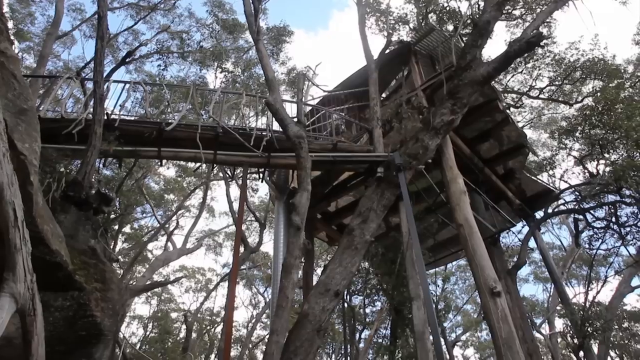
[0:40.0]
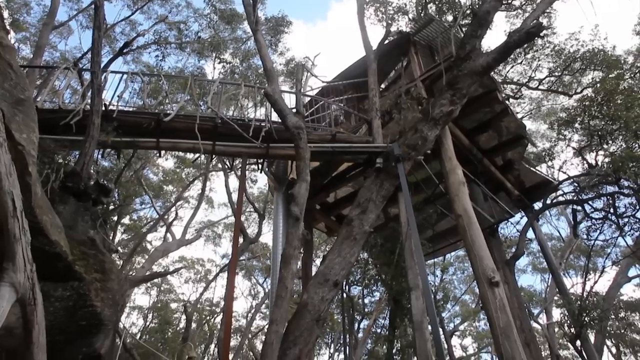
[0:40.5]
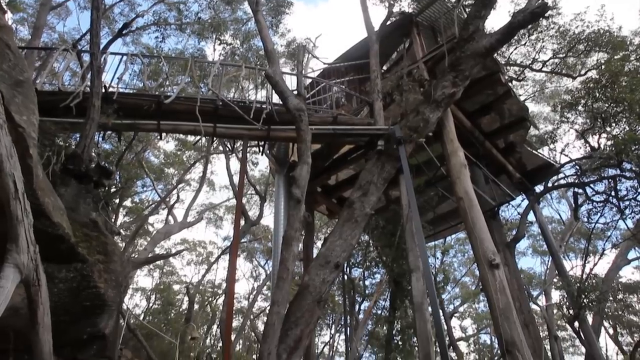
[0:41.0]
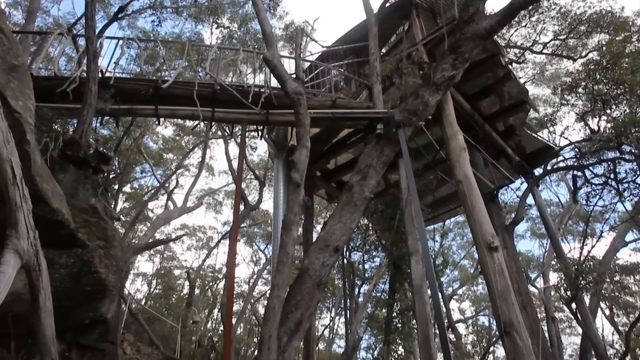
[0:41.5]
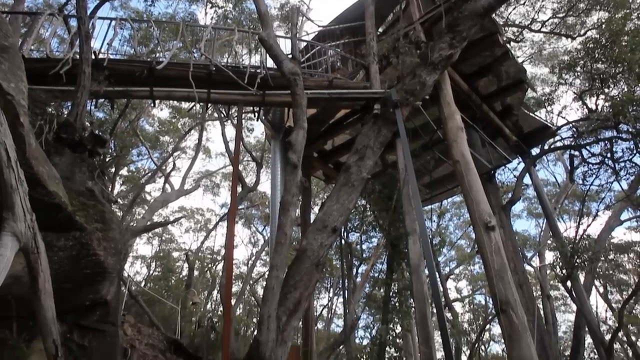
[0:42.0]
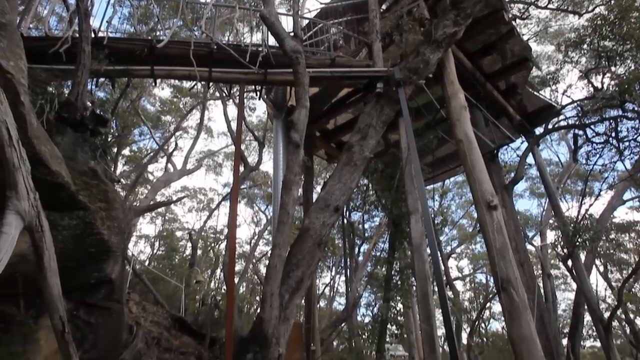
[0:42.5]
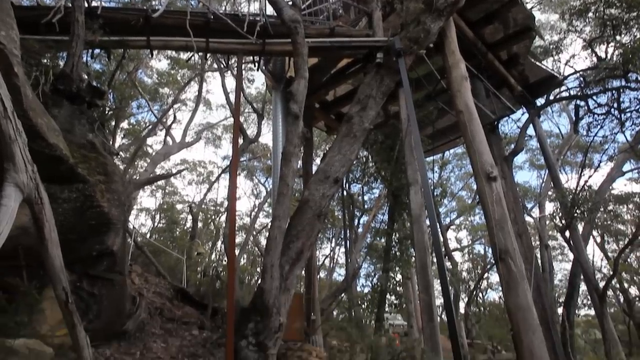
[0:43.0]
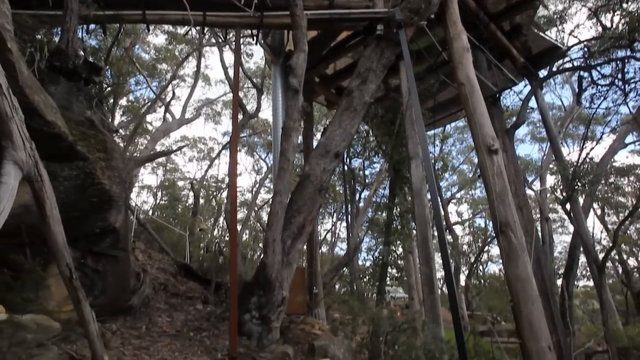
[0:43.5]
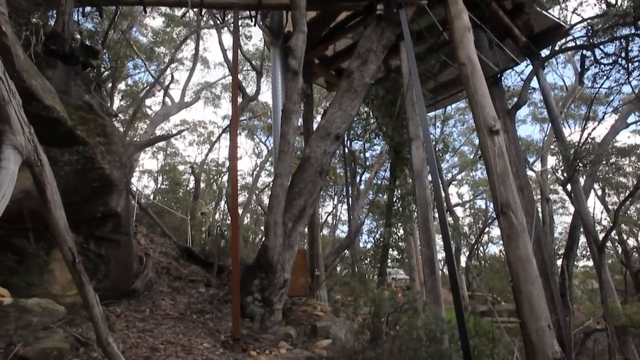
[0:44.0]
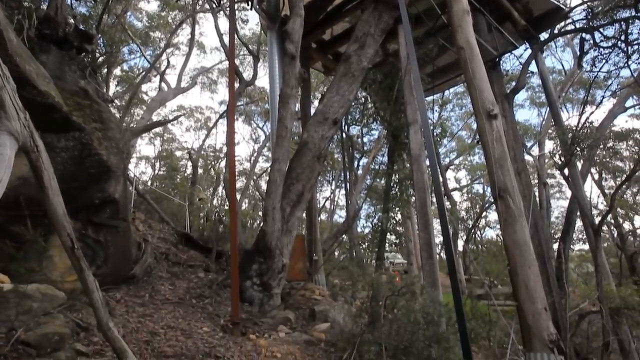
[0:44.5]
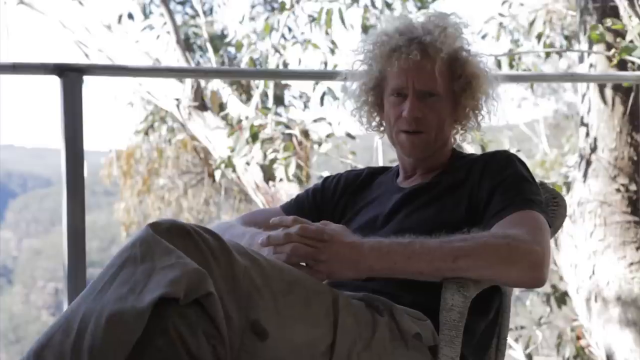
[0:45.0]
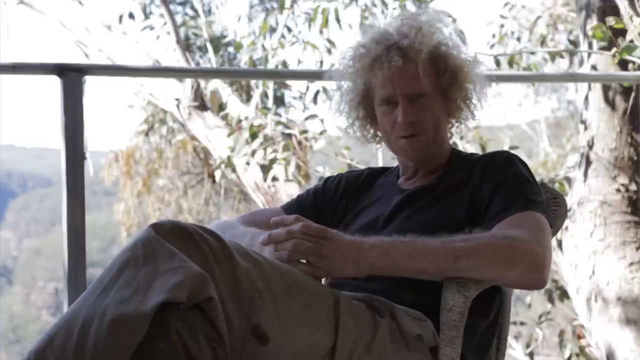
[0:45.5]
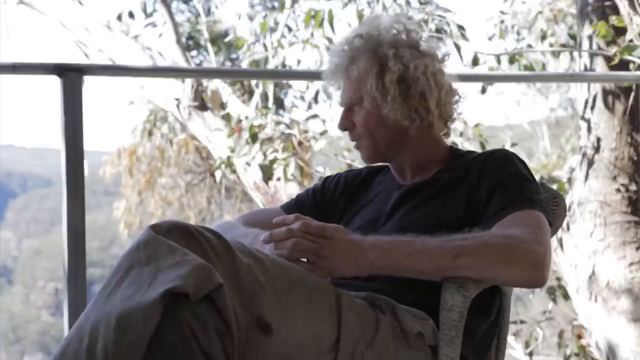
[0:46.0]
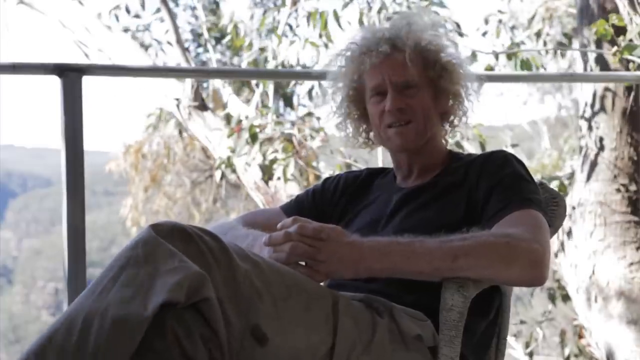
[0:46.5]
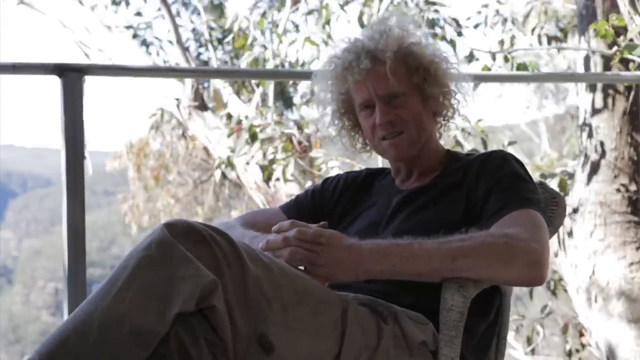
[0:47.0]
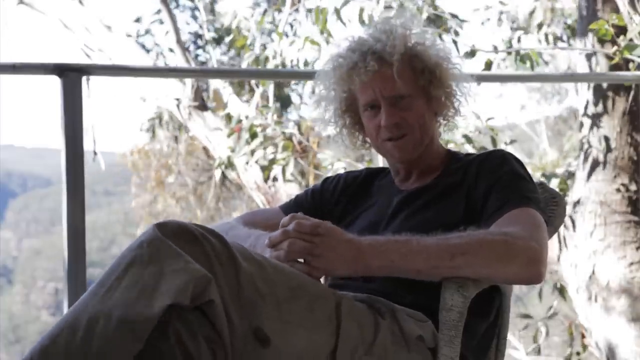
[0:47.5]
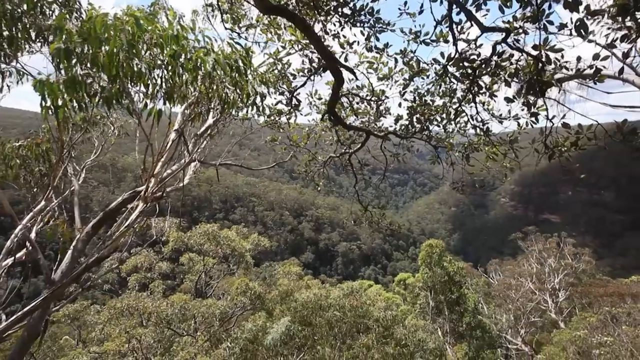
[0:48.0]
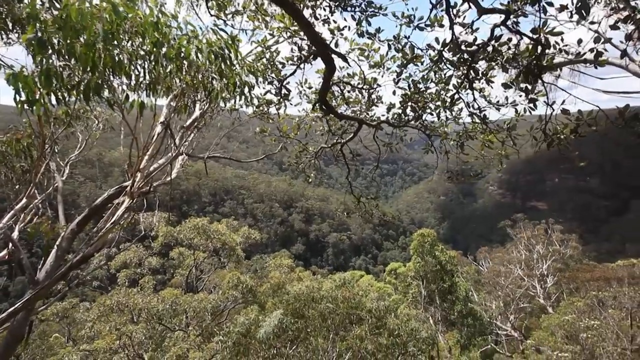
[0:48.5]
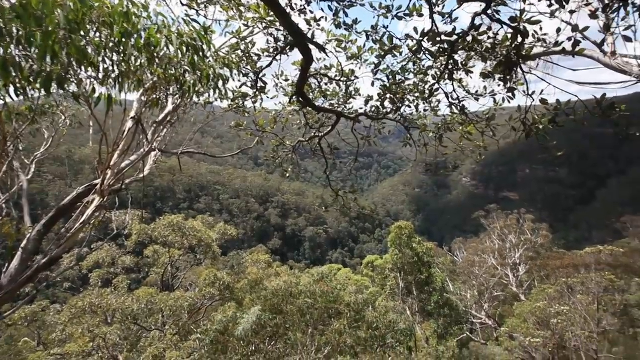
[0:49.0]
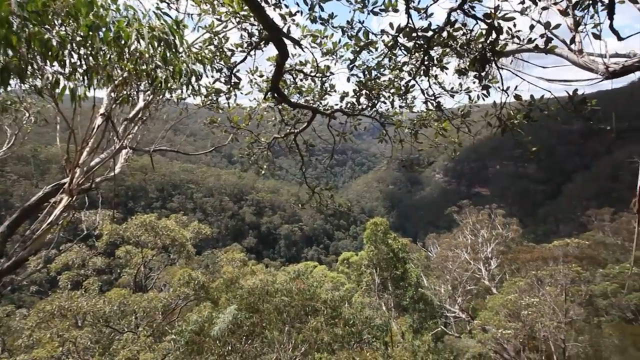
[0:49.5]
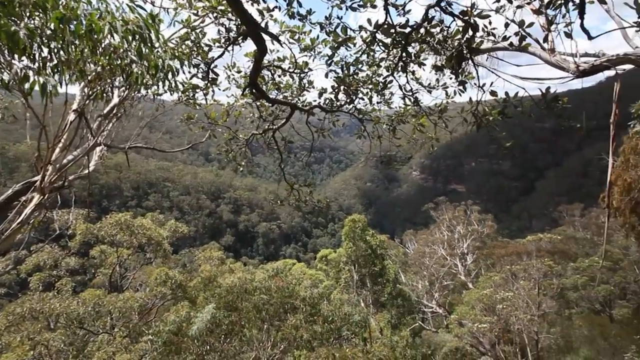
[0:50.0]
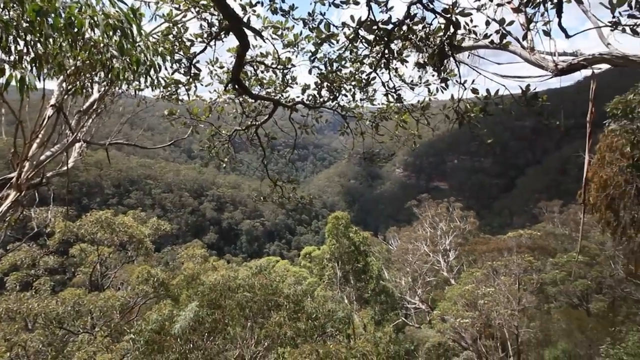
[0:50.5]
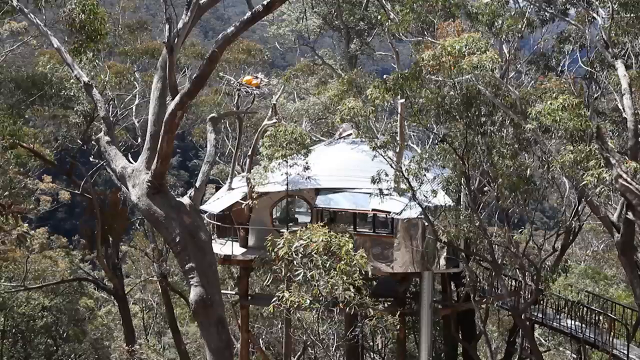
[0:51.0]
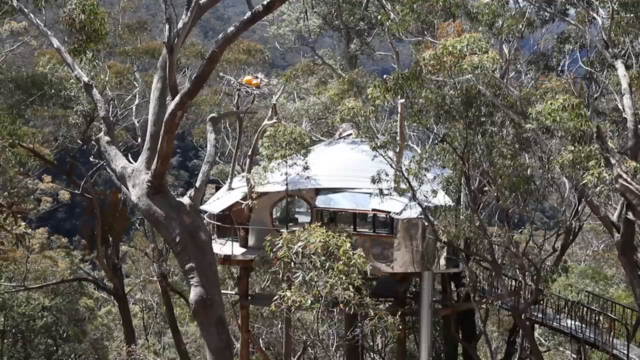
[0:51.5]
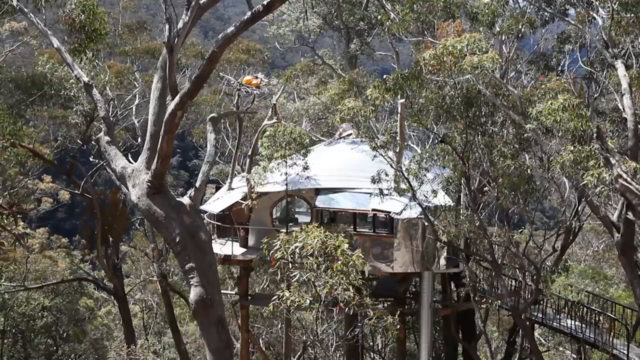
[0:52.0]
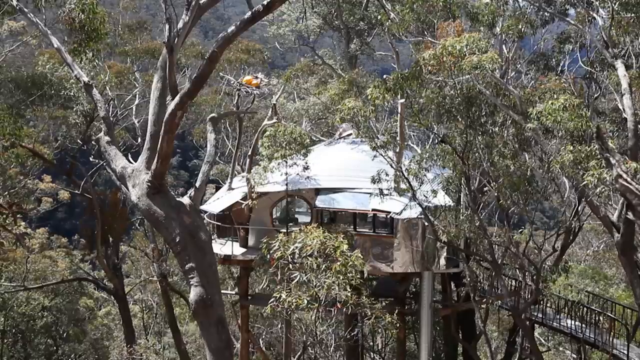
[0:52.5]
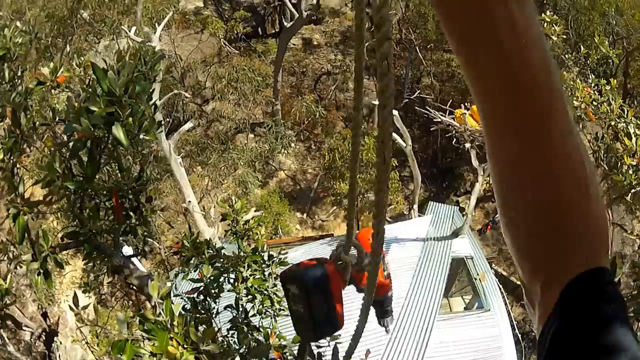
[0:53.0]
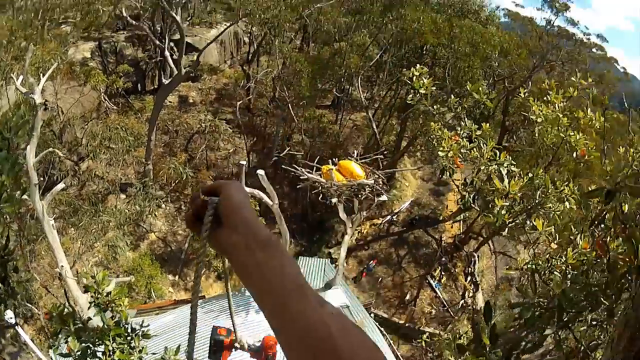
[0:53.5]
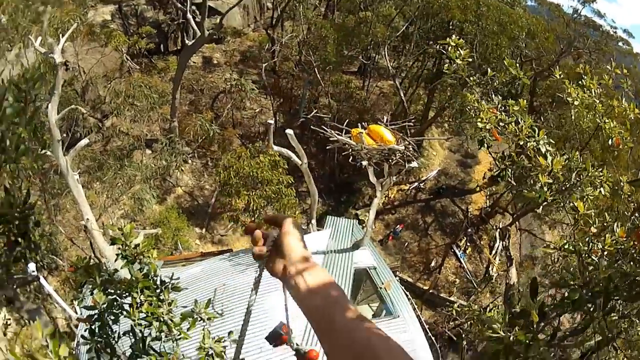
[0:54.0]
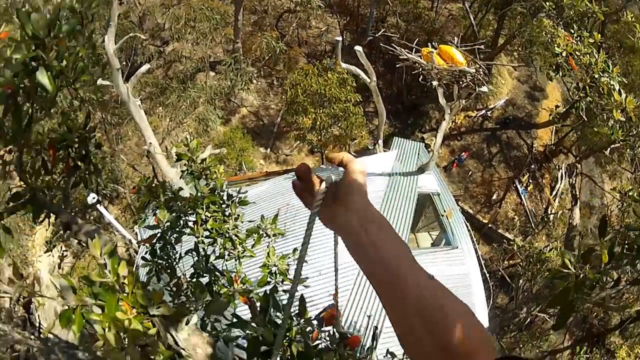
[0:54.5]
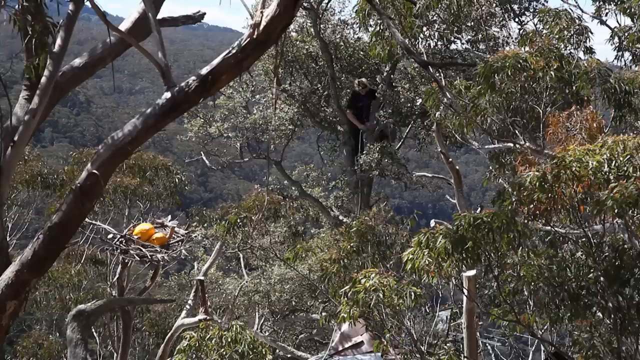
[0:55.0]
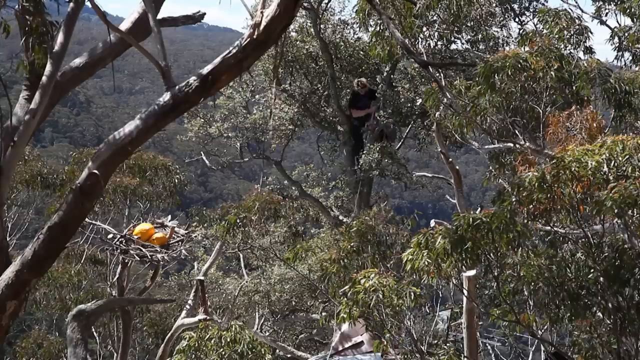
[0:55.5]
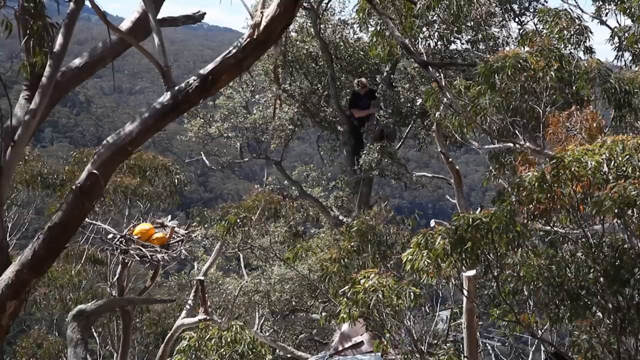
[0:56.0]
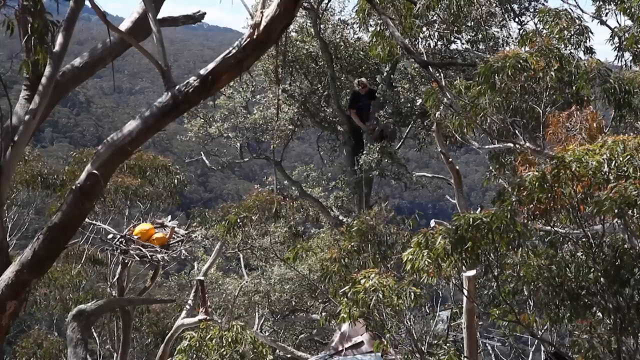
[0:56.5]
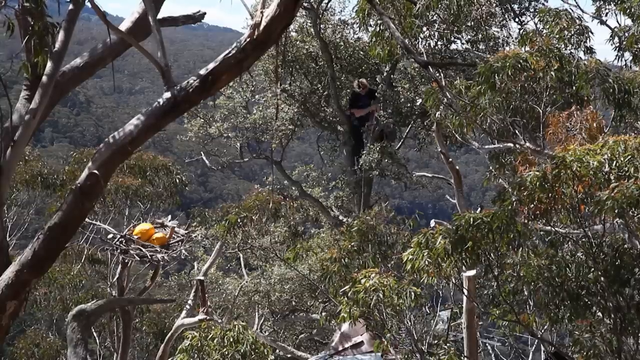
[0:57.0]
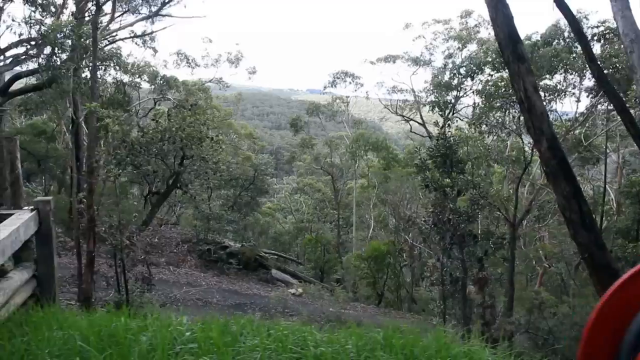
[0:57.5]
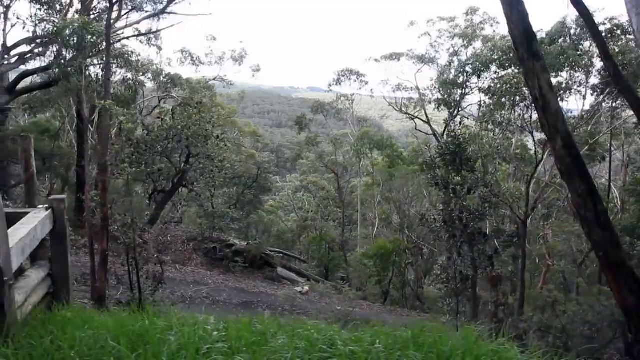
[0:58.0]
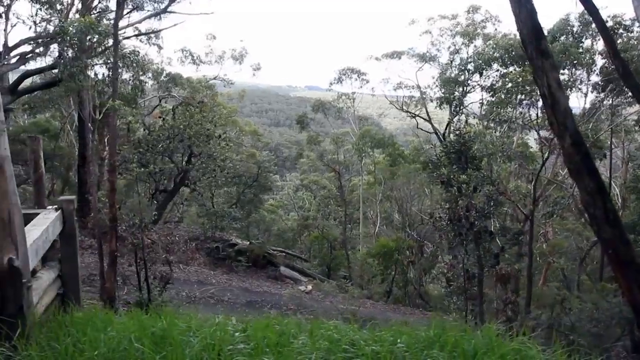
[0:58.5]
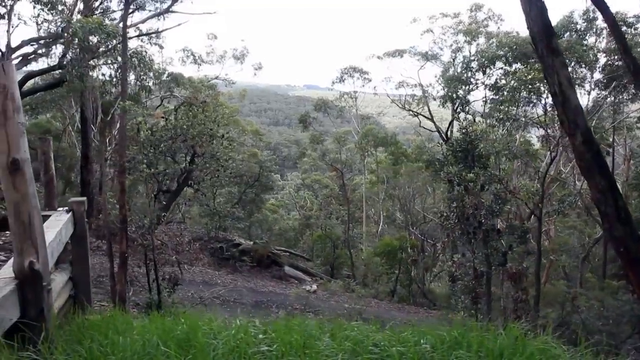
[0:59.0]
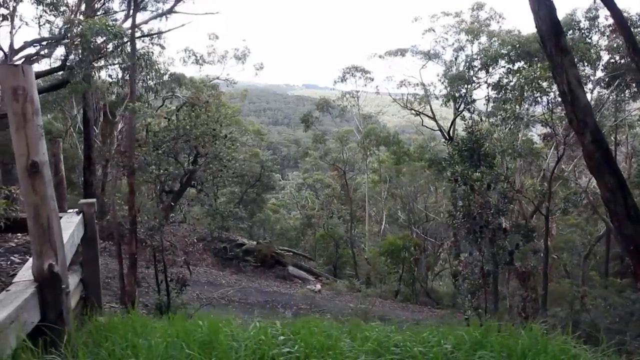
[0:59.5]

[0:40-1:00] The outside of the treehouse is shown, with the camera moving from bottom to top to reveal the large posts holding up the treehouse and the bridge. The camera slowly pans down to the base, where the beams, or tree trunks, holding the treehouse up come out of the ground. The video then cuts to what looks like a man sitting on a chair. His hair is white, curly and wild, and he wears a t-shirt and what look like khaki pants. His hands are folded together on his abdomen, with his arms resting on either side of the chair. He looks at the camera, then looks off toward the left and turns to look at the view; he is probably sitting on the edge of the treehouse area.